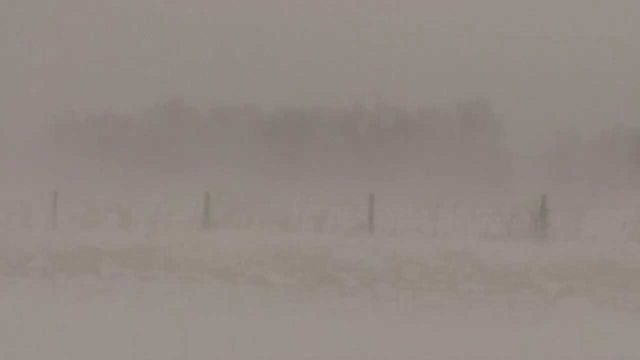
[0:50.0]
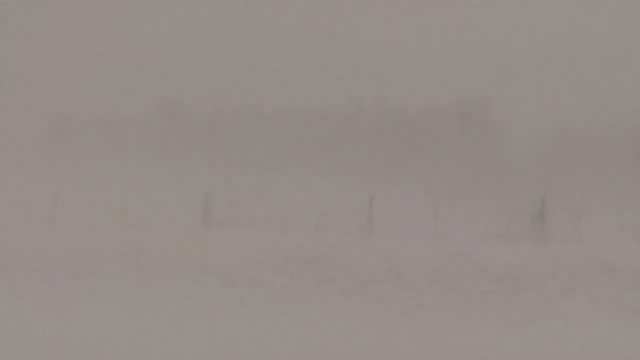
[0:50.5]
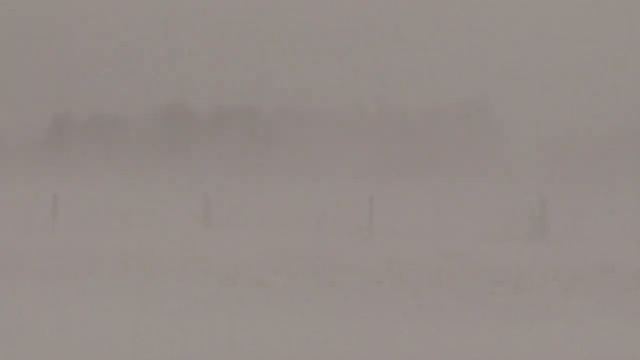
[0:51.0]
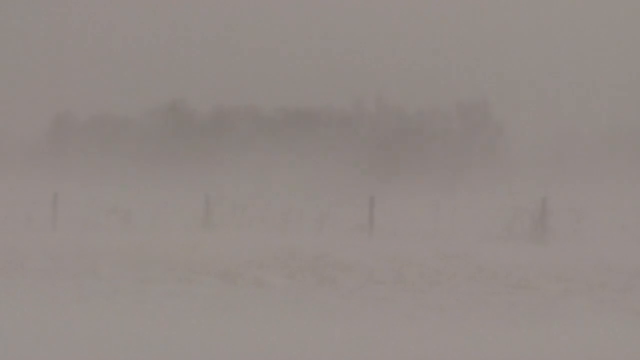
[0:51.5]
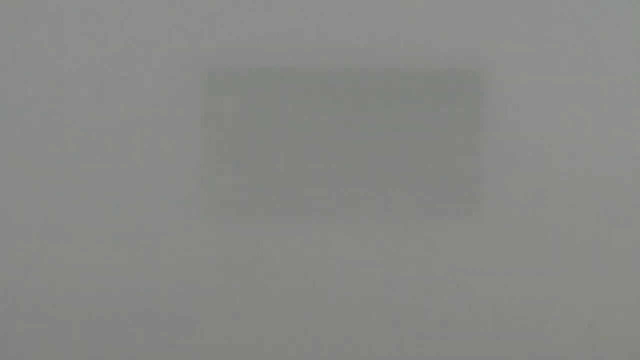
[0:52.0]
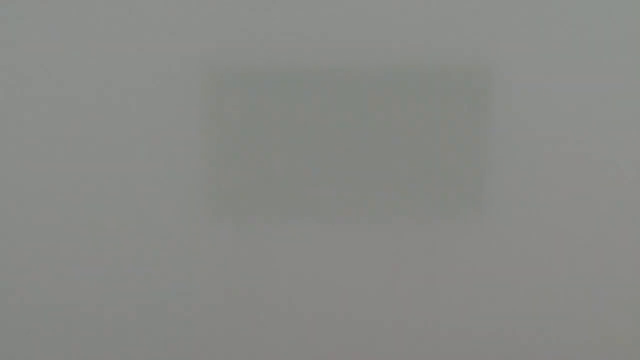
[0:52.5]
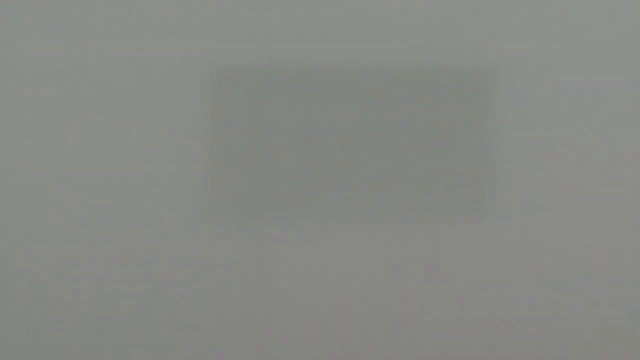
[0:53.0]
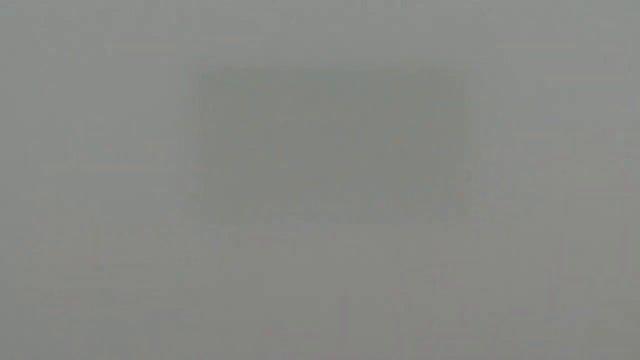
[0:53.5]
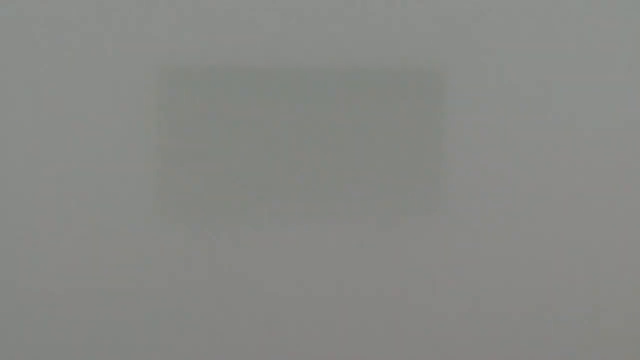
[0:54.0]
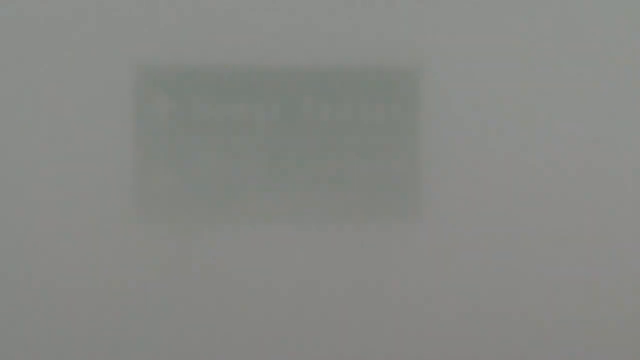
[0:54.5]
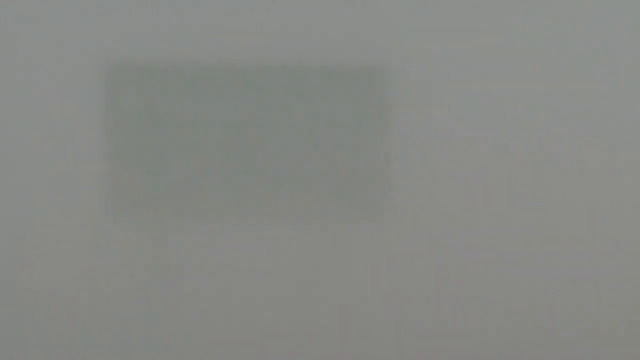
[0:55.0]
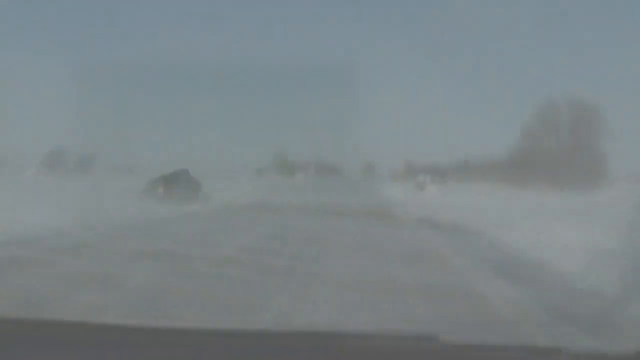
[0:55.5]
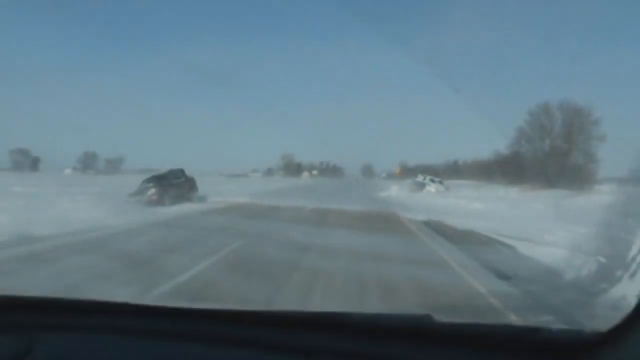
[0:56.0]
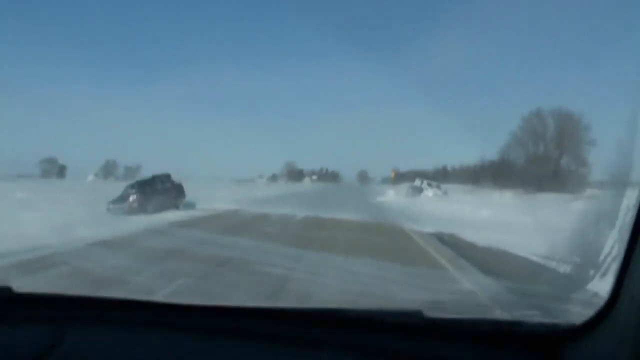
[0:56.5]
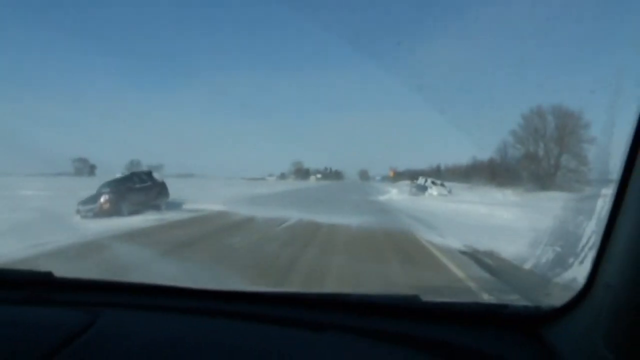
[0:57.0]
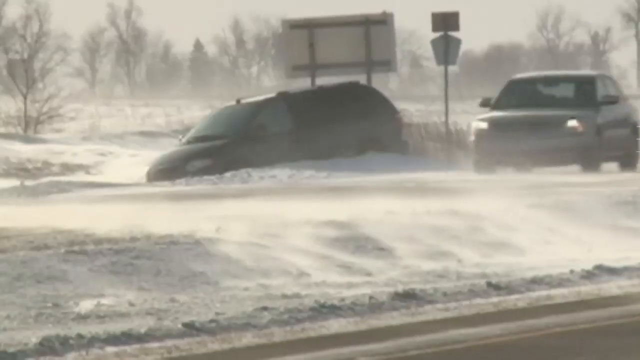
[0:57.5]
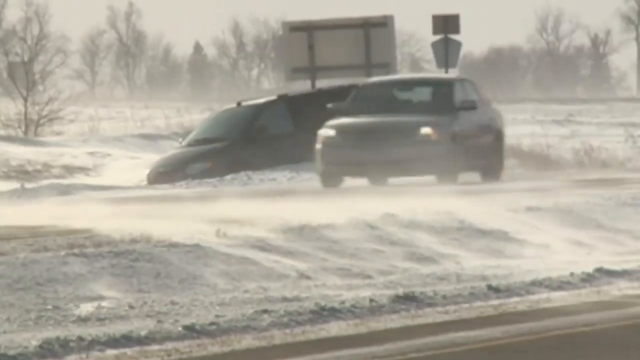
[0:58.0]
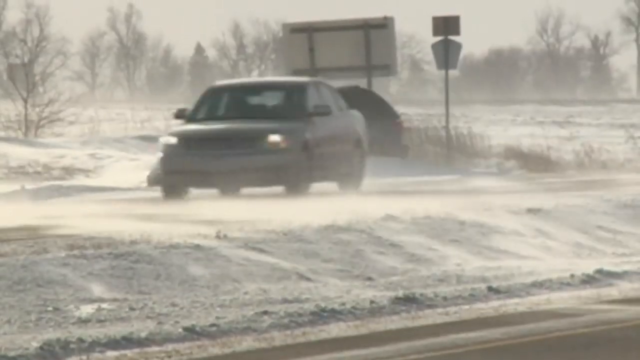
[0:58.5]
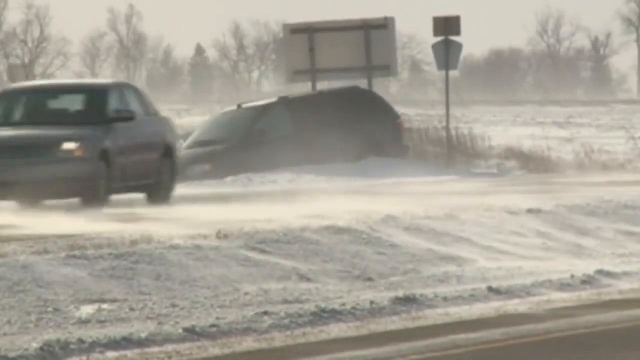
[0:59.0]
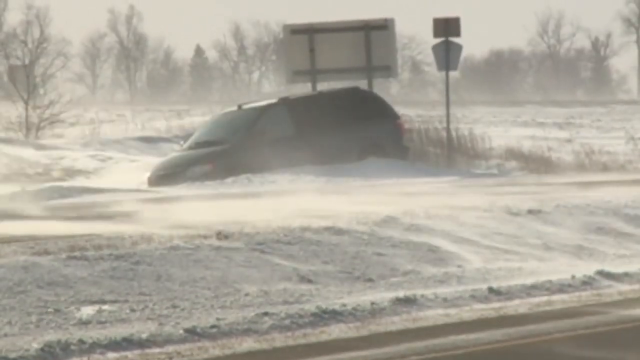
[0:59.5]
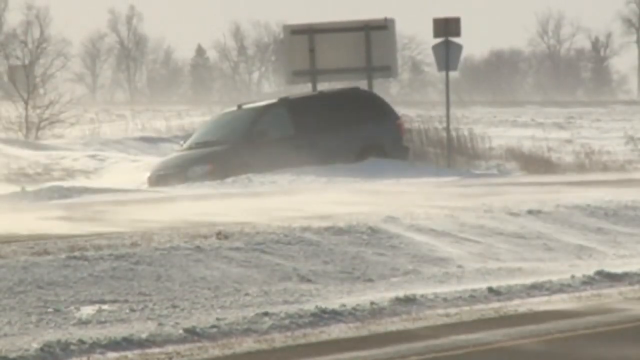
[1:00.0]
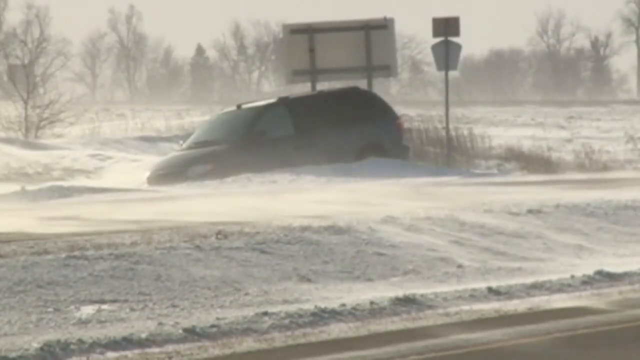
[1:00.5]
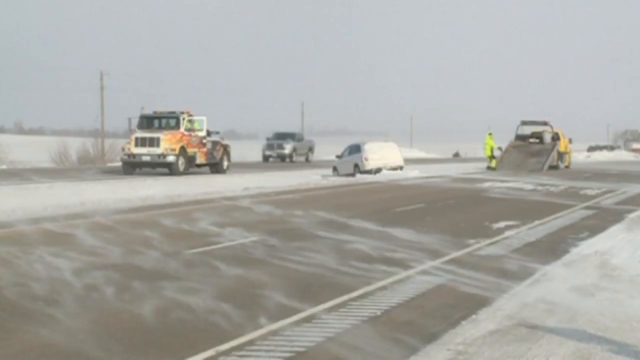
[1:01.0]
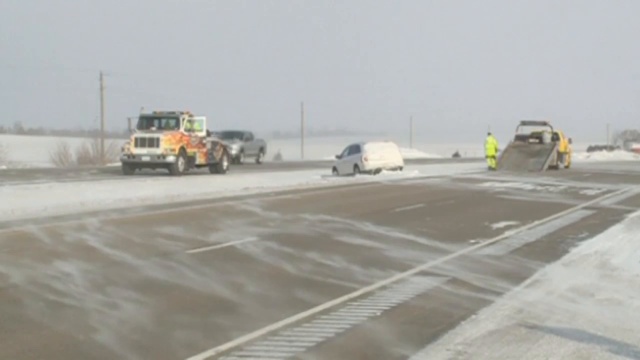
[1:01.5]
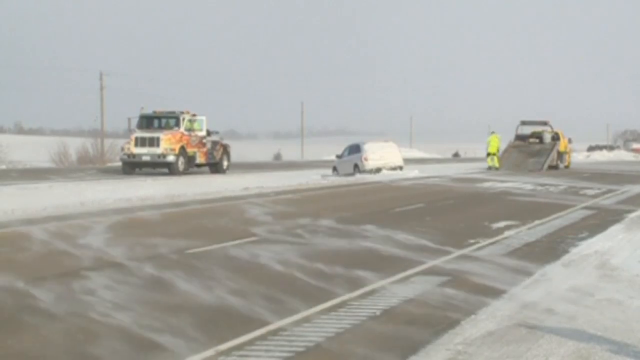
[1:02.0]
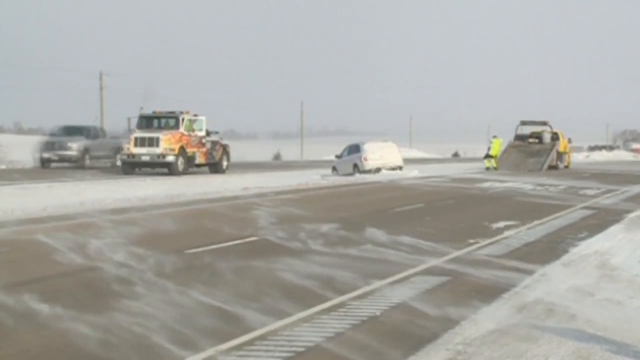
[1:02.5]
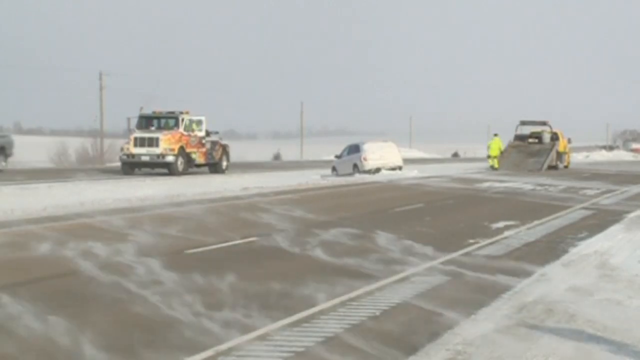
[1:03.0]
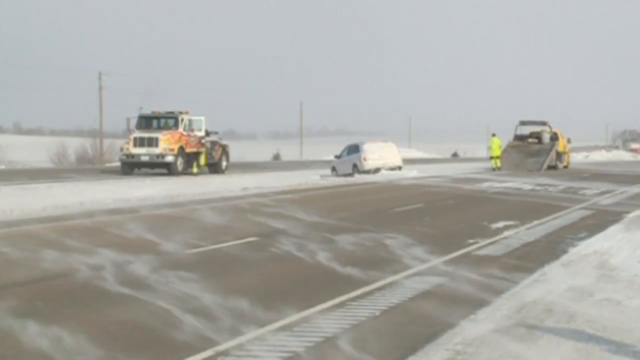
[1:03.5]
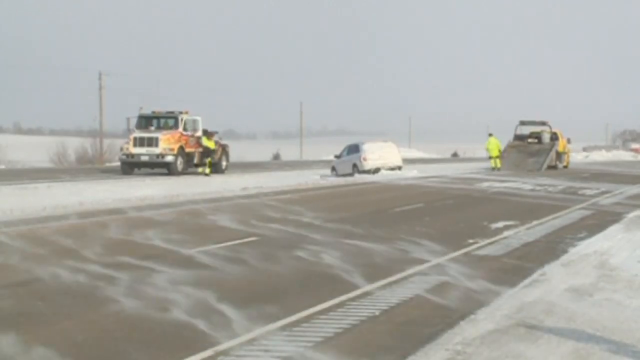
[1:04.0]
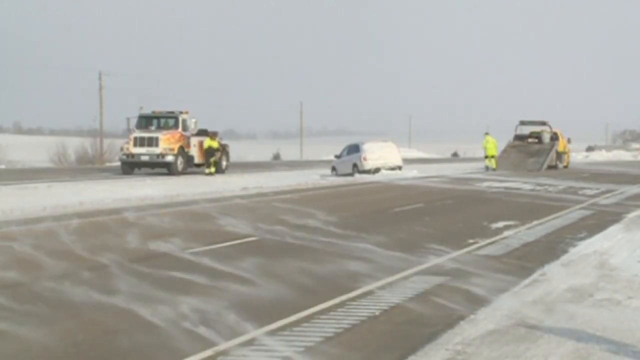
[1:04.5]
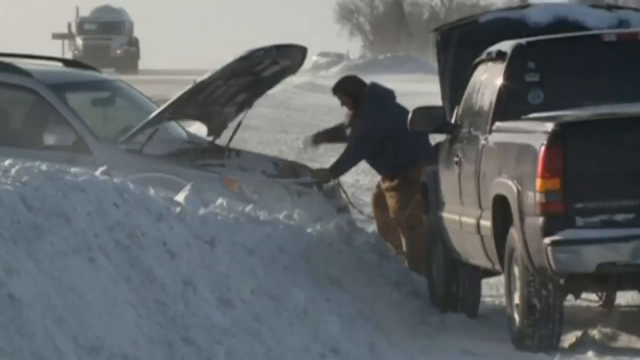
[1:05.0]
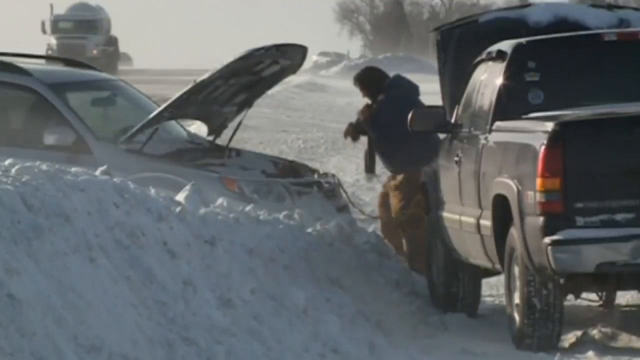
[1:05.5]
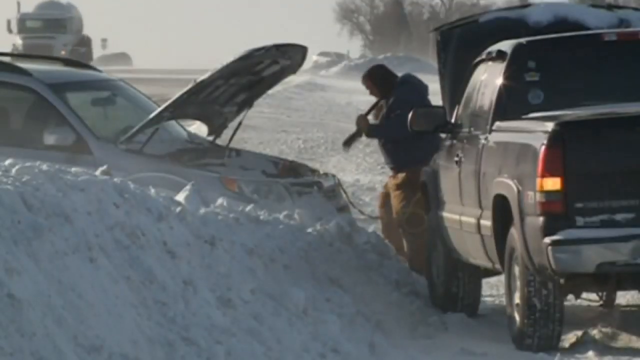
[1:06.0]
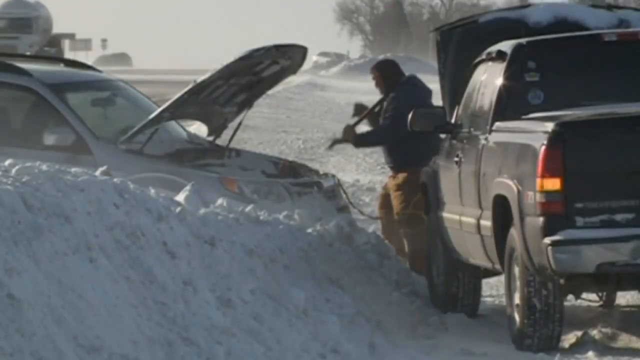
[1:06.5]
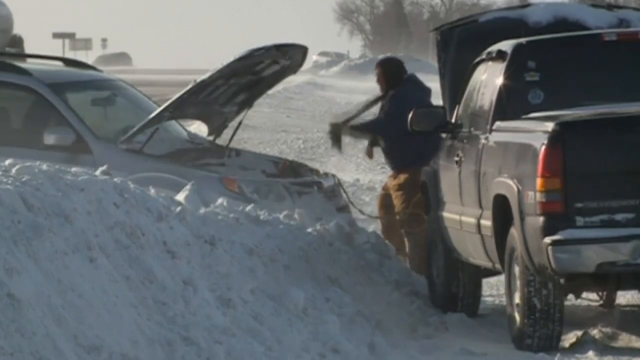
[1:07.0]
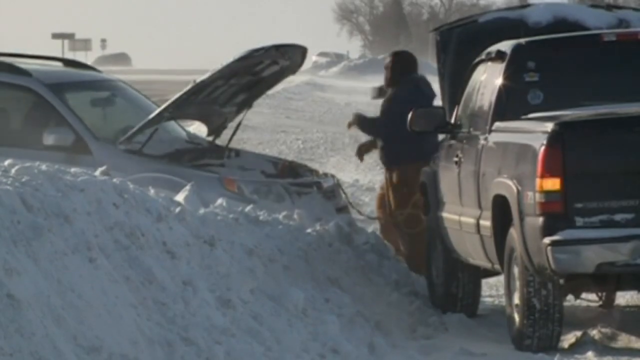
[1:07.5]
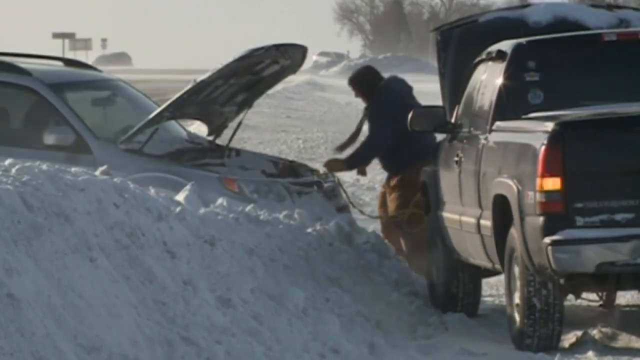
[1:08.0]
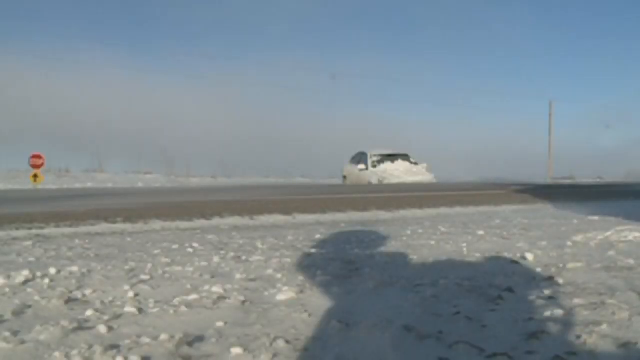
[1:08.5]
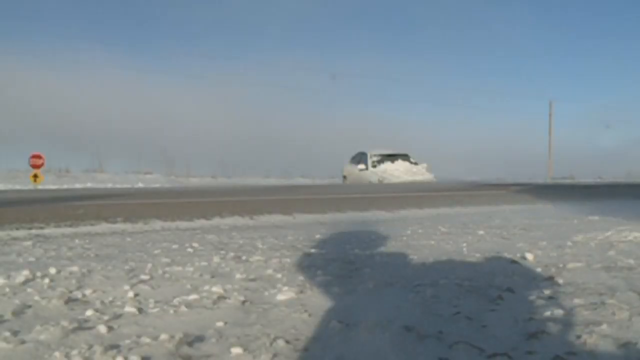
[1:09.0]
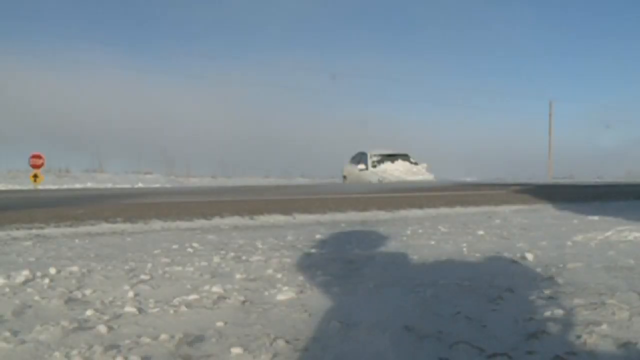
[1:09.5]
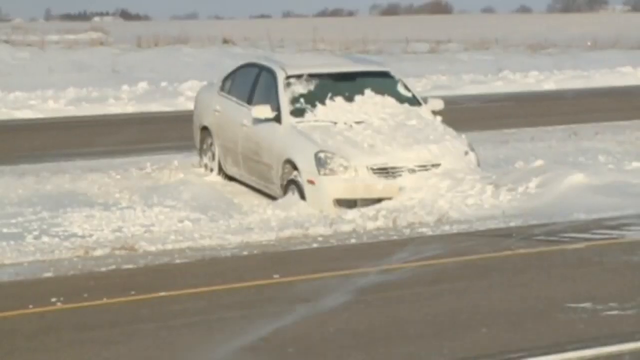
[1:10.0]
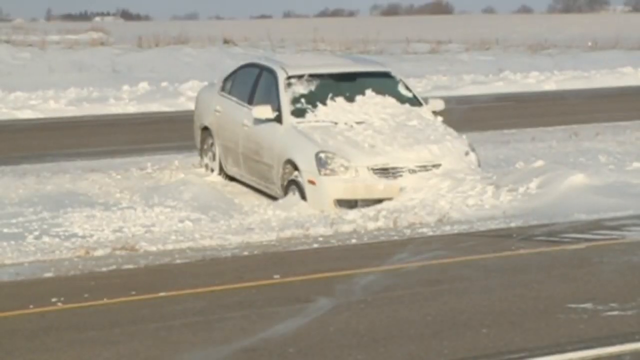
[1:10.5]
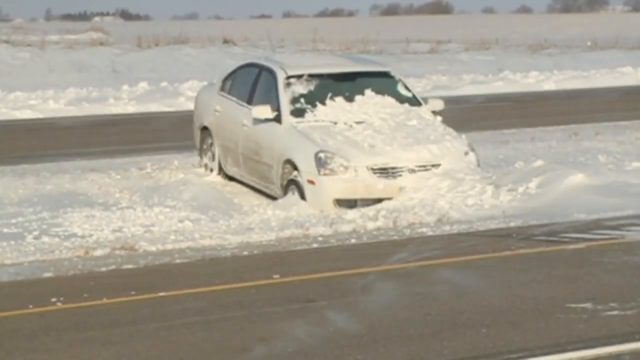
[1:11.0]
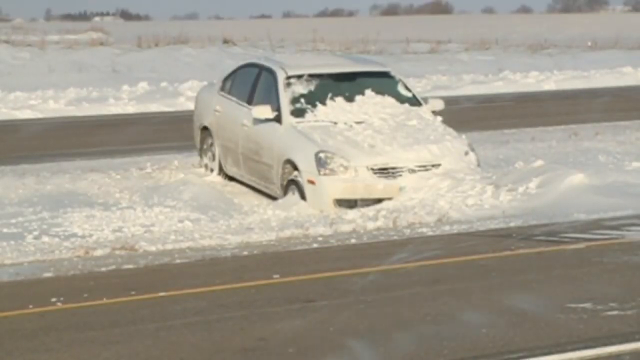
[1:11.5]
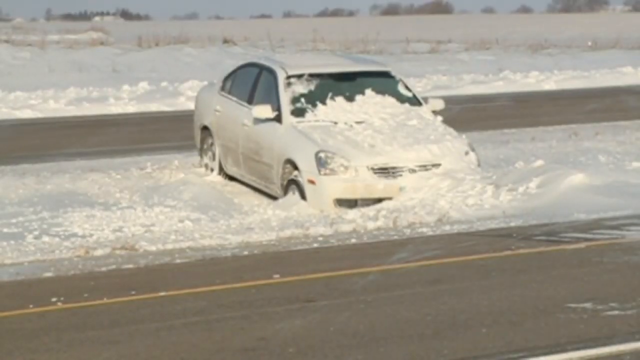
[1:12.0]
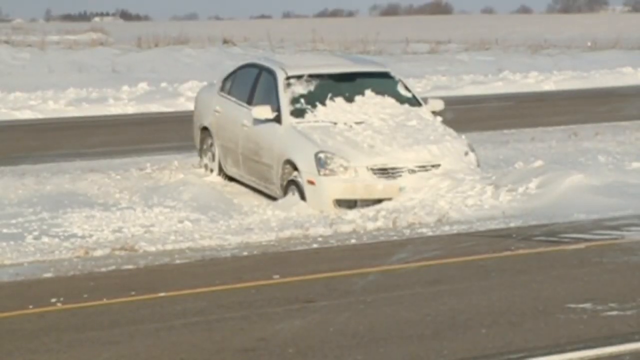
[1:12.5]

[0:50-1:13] The camera moves across the mountains, which have fewer trees in some areas and, in other portions, many more trees and snow covering their surfaces. It also covers an area that looks like a large hole filled with snow, and an area devoid of snow where the ground surface is very smooth and brown, with a long brown log lying on the ground. The camera moves down to a colder-looking environment with snow falling, and moves toward a highway where cold wind blows from side to side as the snow falls. Cars are stuck in different parts of the highway, while other cars drive away from the scene; black and white are the distinct car colors. Two trucks are parked adjacent to each other, and two men in yellow work suits are trying to help the stuck cars.